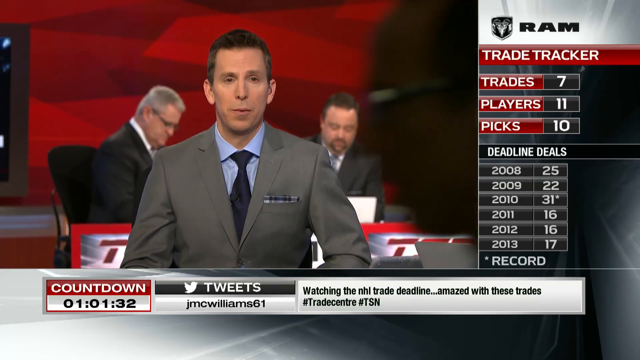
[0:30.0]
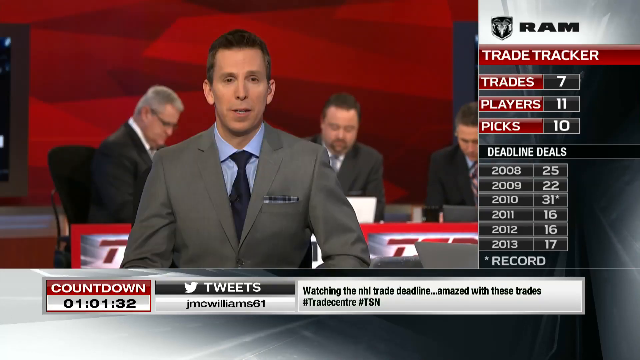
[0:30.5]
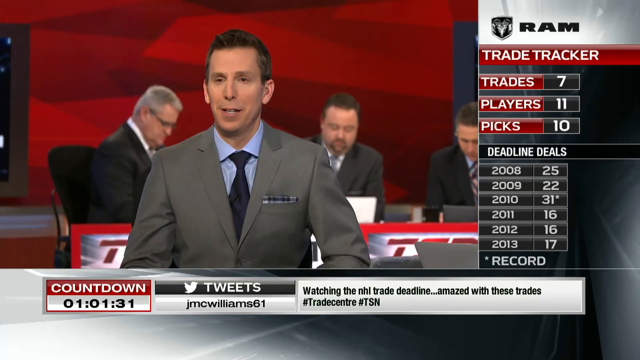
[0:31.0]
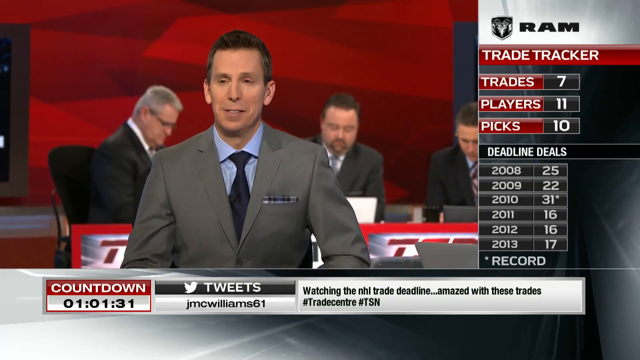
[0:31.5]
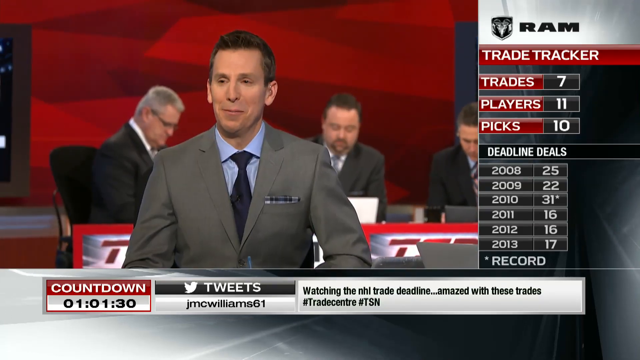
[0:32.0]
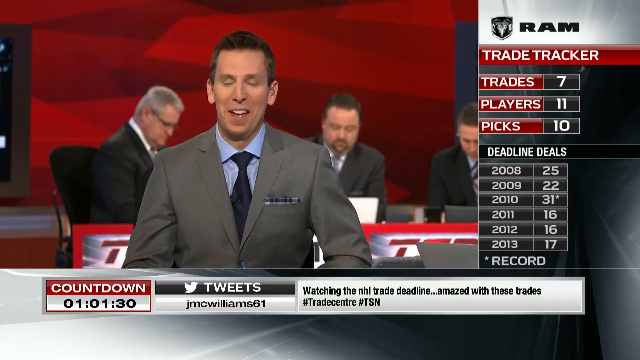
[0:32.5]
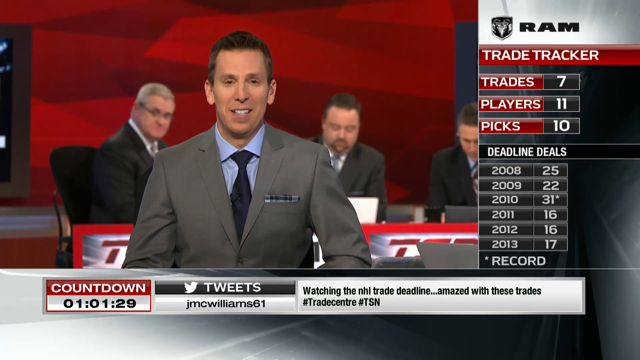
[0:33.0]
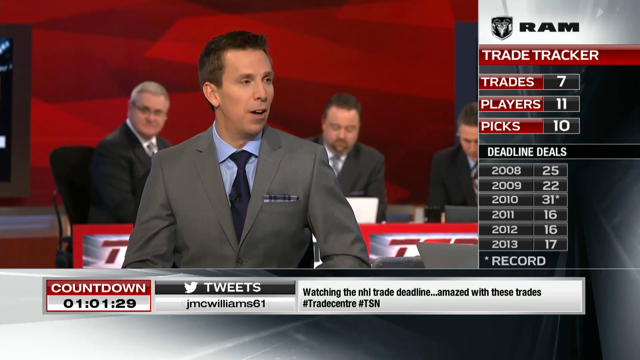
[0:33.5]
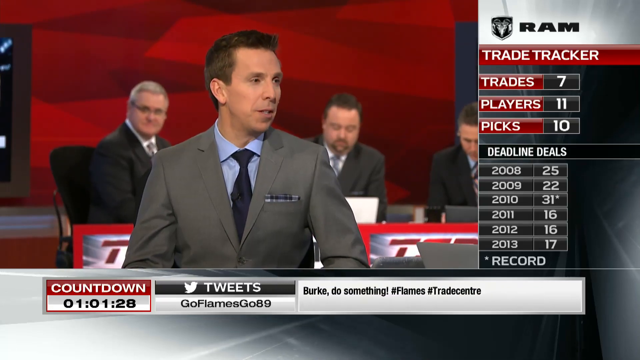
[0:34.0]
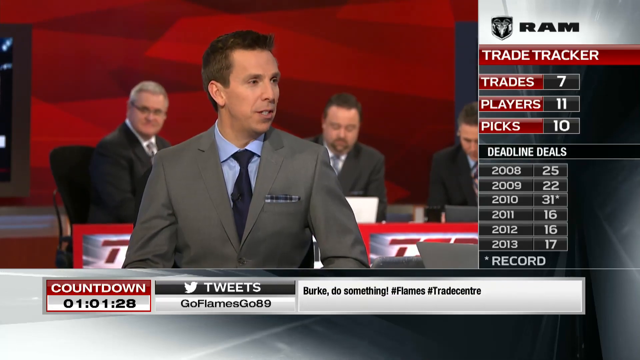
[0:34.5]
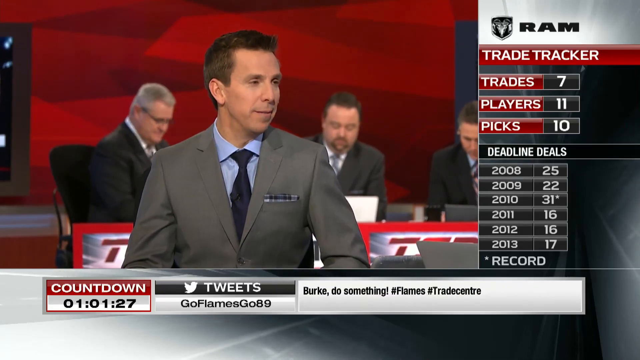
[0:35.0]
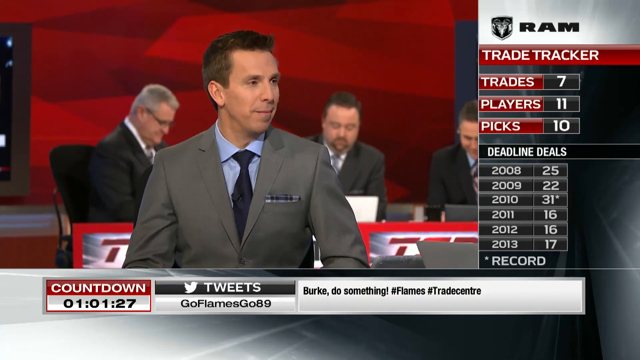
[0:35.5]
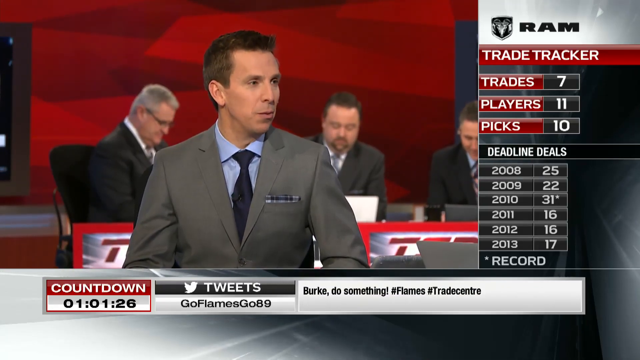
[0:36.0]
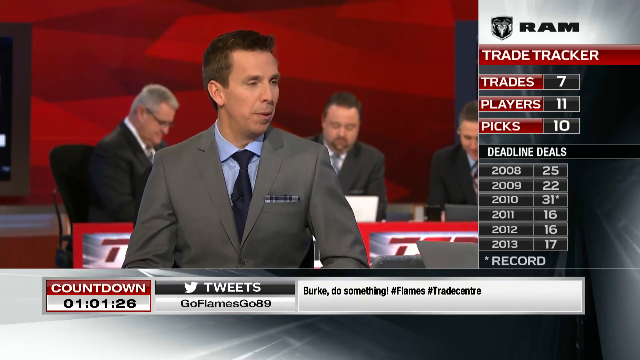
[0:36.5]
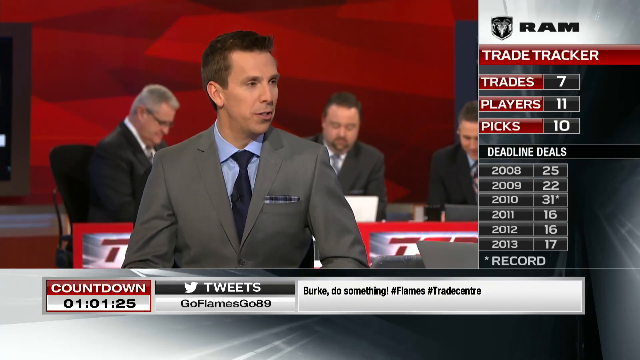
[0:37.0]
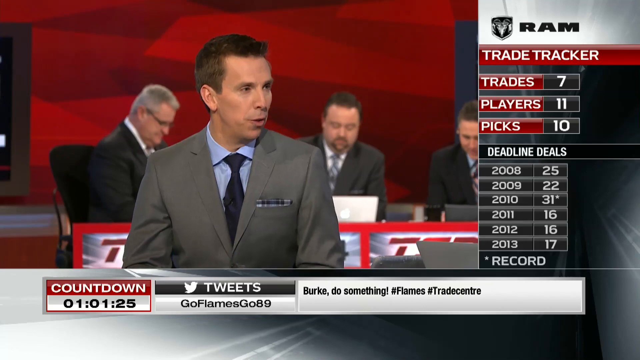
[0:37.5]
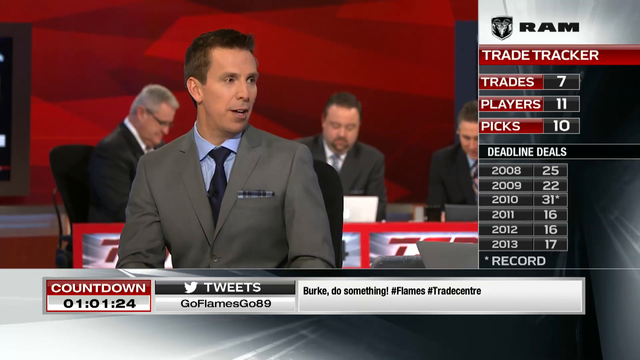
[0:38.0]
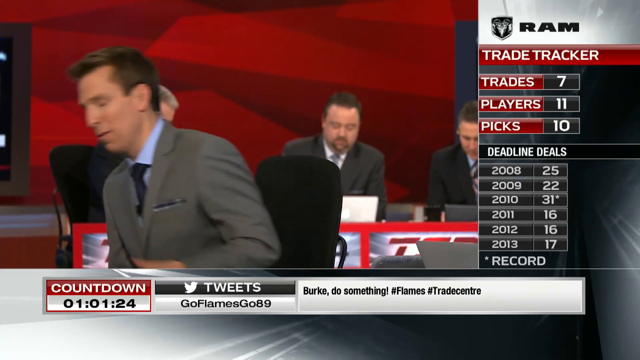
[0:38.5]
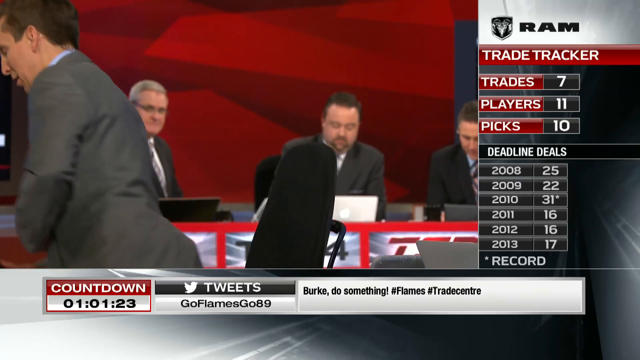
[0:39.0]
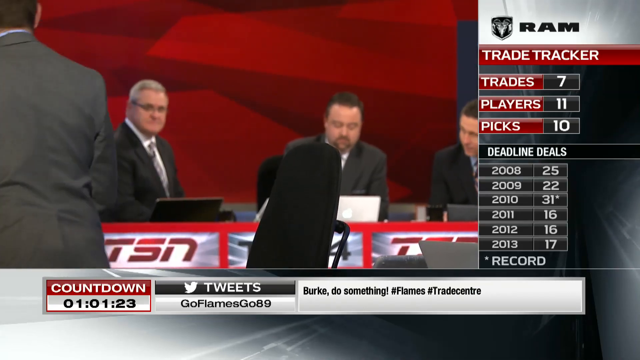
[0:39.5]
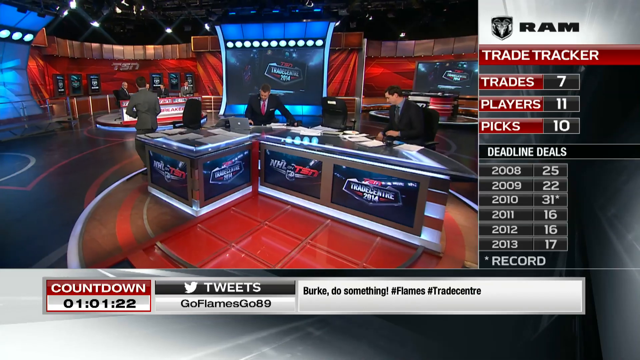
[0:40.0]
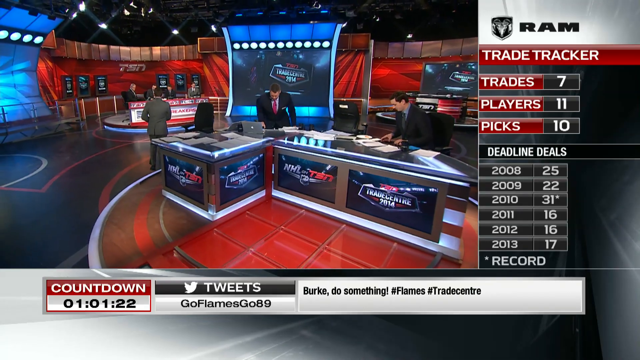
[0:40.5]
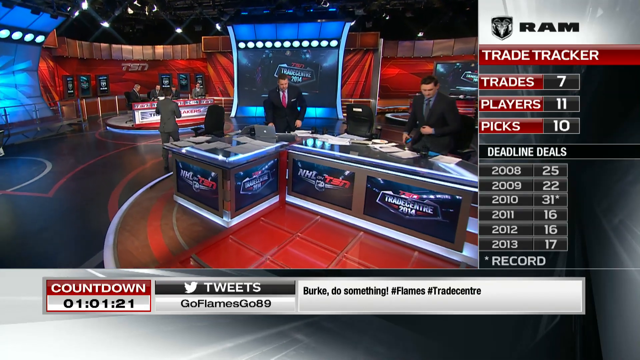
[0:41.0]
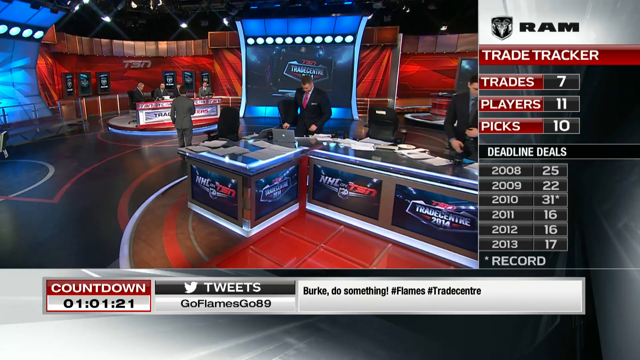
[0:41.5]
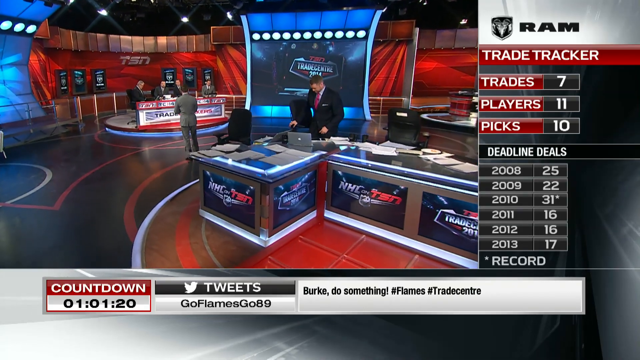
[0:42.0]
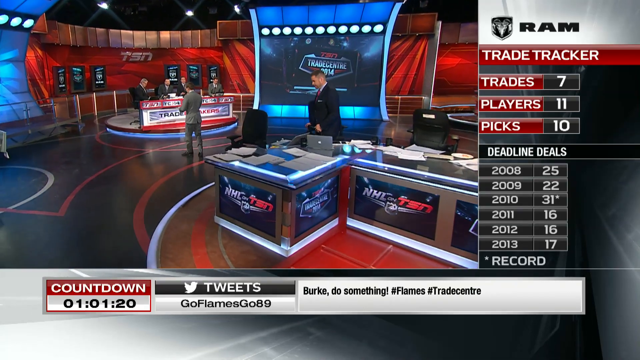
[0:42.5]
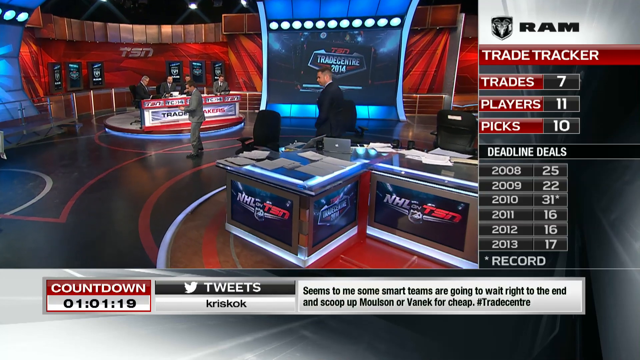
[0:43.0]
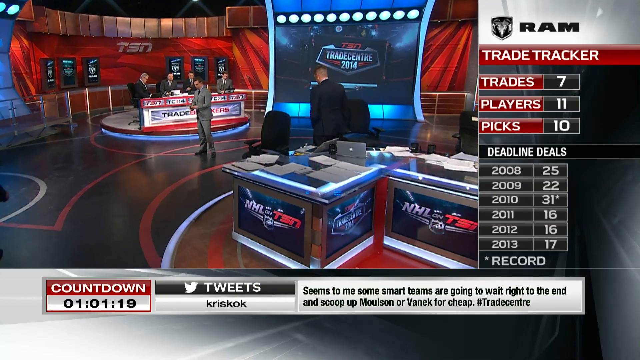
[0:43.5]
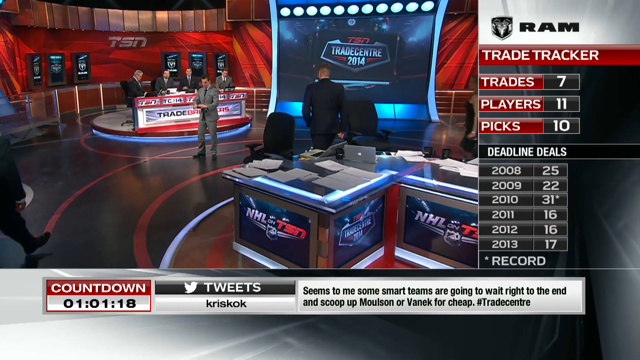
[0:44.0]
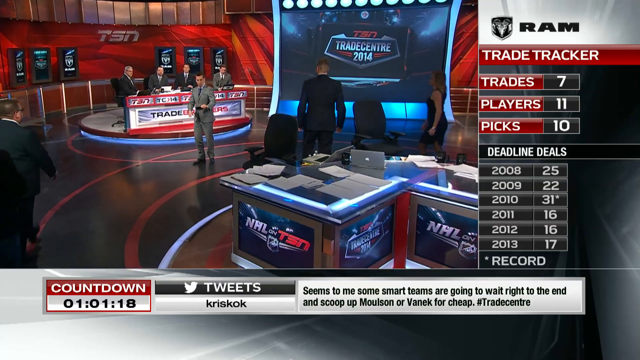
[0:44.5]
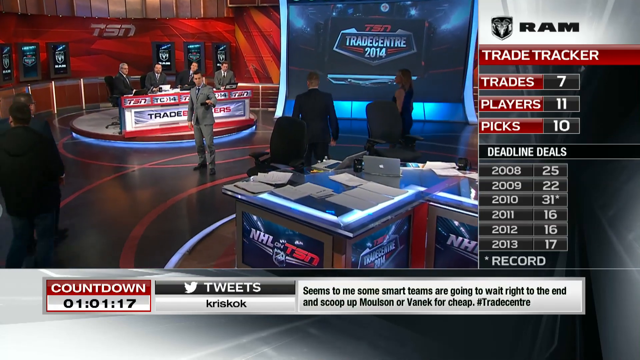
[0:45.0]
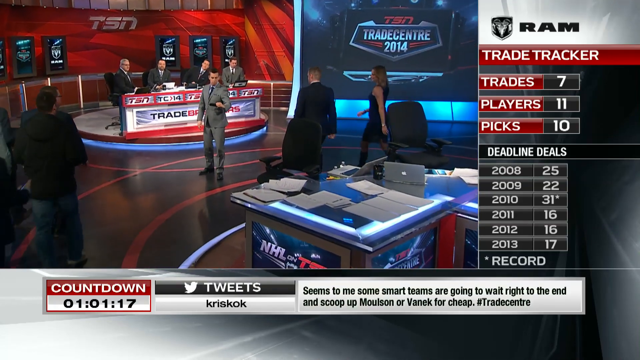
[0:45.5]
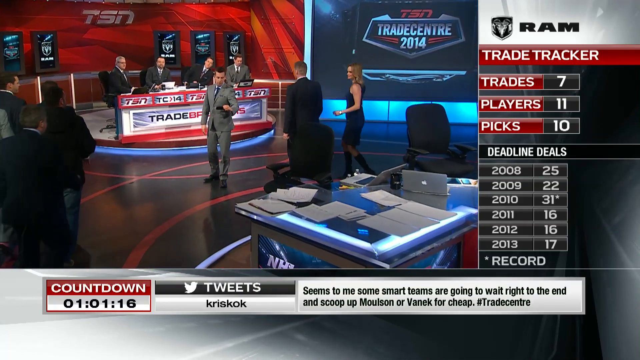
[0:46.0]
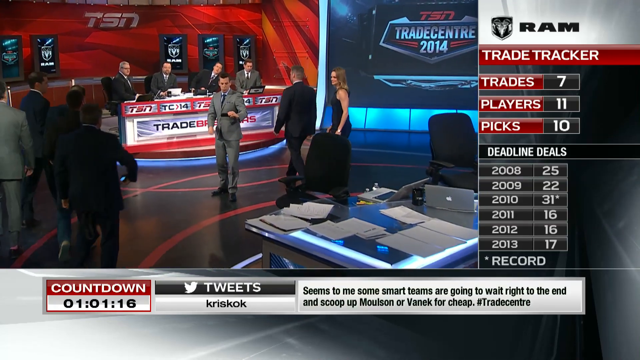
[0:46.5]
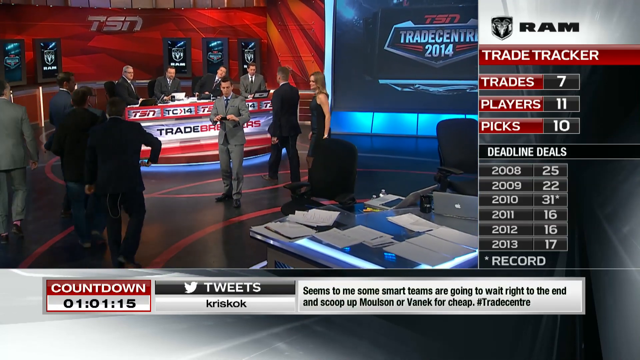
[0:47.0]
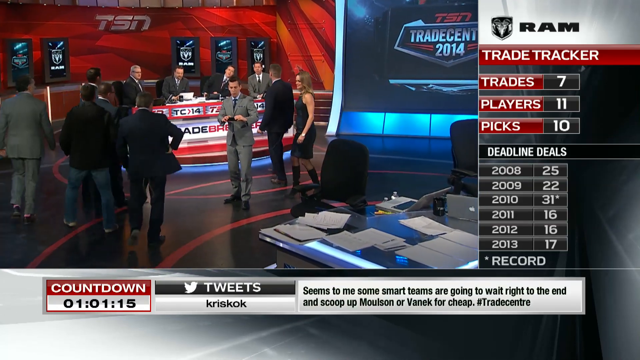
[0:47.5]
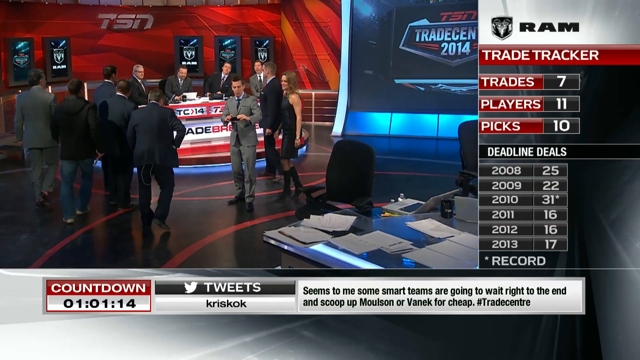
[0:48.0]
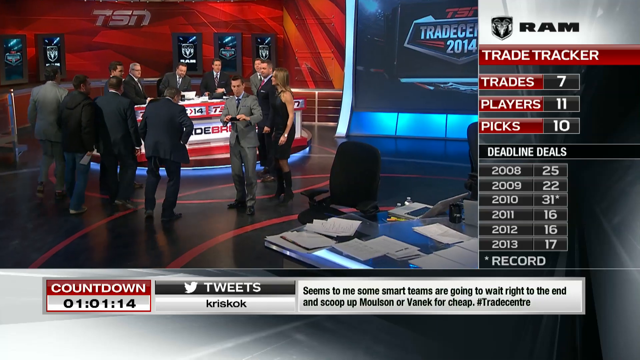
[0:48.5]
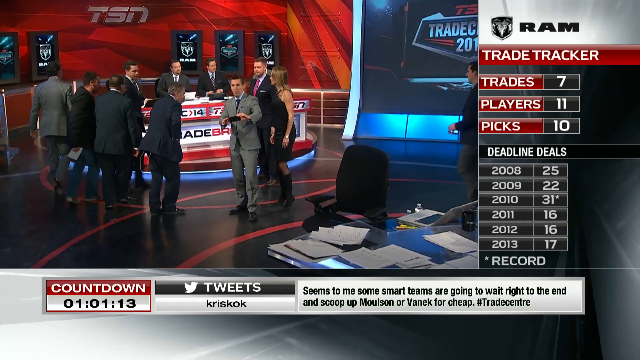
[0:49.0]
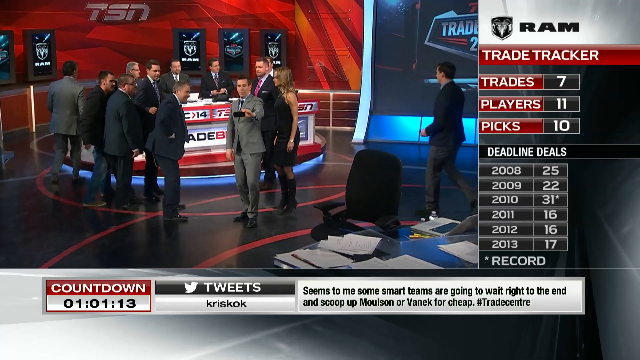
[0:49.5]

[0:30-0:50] A newscaster sits behind a desk, talking on camera. To the right is a banner with the Ram logo above it, which would be Dodge Ram, and below that the text "Trade Tracker" and "Trades 7, Players 11, Picks 10." "Deadline deals" also appears on the right side of the screen, and a countdown clock is in the lower left. The scene on the news desk transitions: the newscaster stands up and walks over to the middle of the studio, and as he does, half a dozen or so other people walk into the middle of the studio to surround him. This looks like it might be a change of scene between news segments, with everyone gathering on the floor around the man who was sitting behind the desk. A tweet at the bottom of the screen reads "Watching the NHL trade deadline. Amazed with these trades."